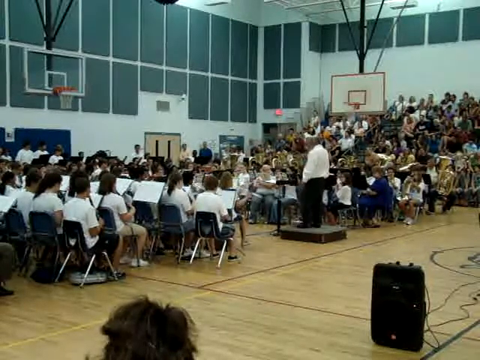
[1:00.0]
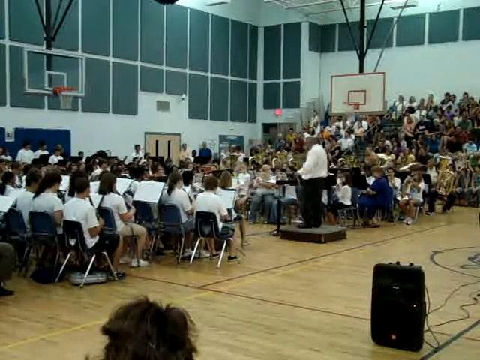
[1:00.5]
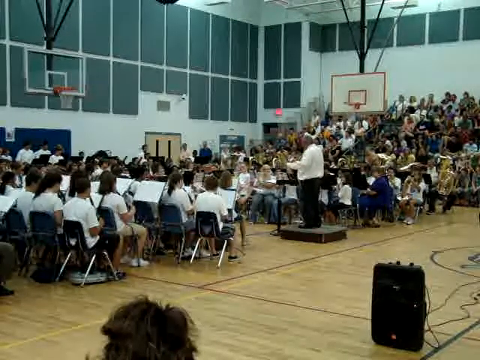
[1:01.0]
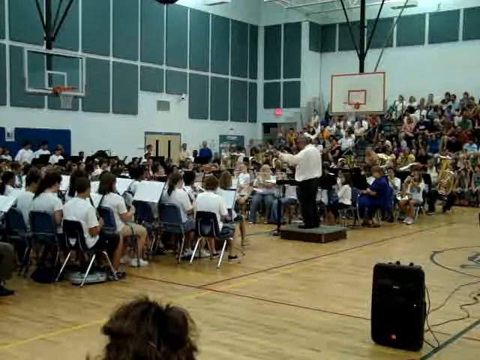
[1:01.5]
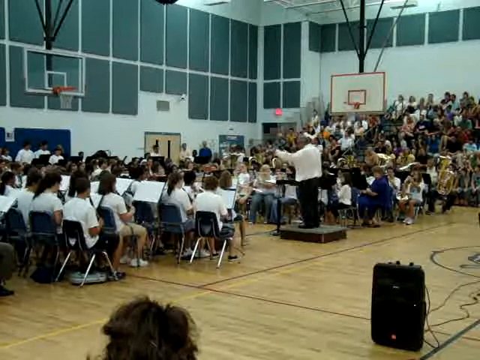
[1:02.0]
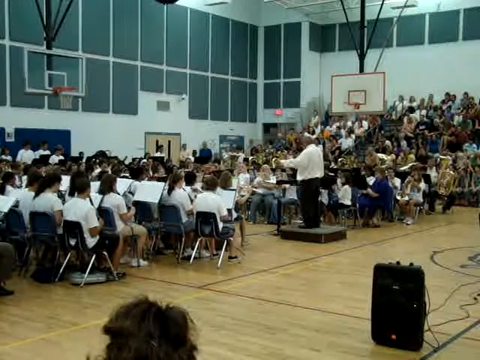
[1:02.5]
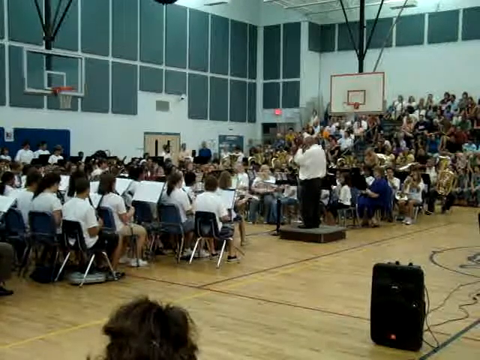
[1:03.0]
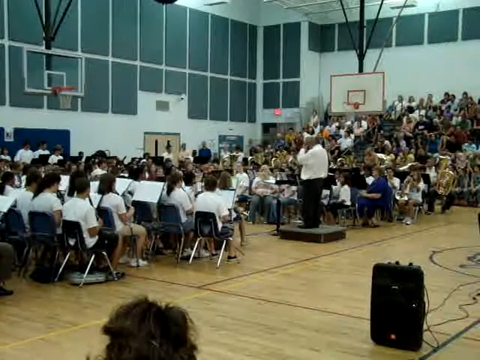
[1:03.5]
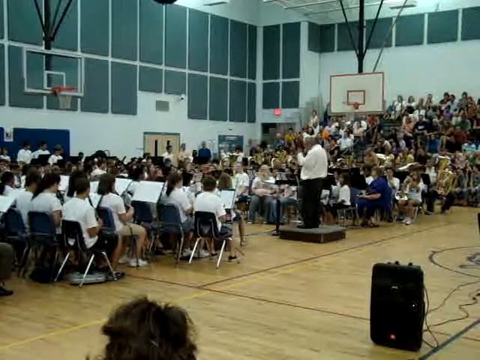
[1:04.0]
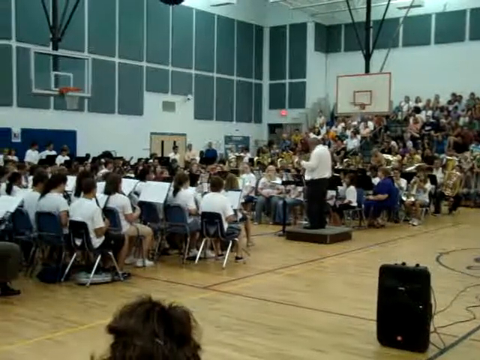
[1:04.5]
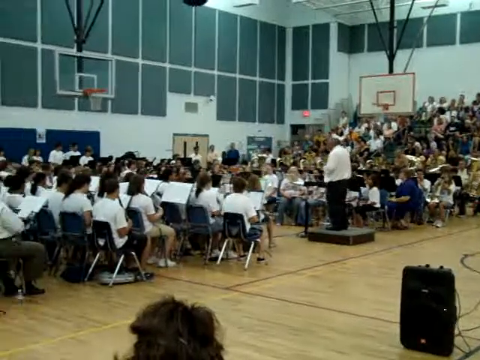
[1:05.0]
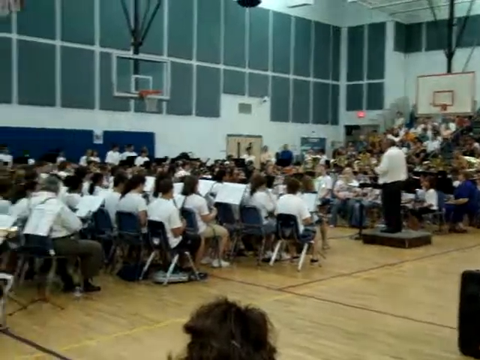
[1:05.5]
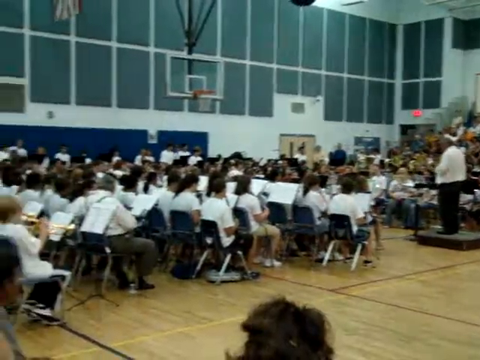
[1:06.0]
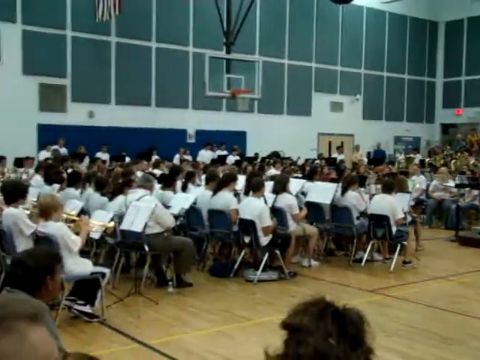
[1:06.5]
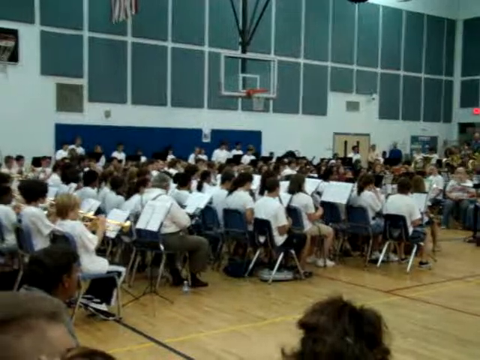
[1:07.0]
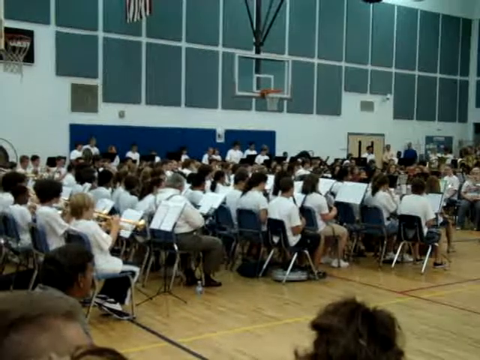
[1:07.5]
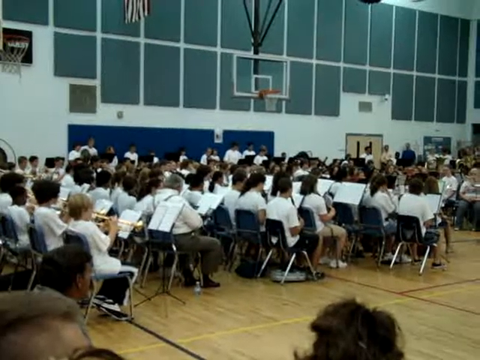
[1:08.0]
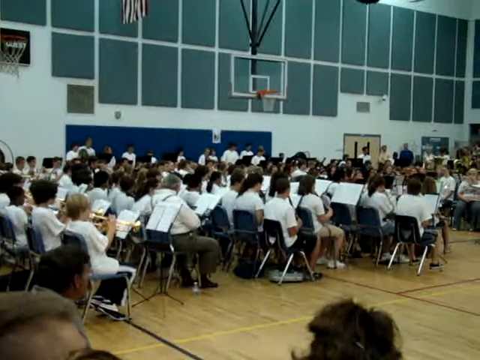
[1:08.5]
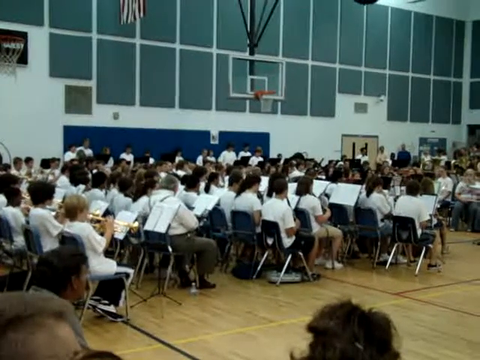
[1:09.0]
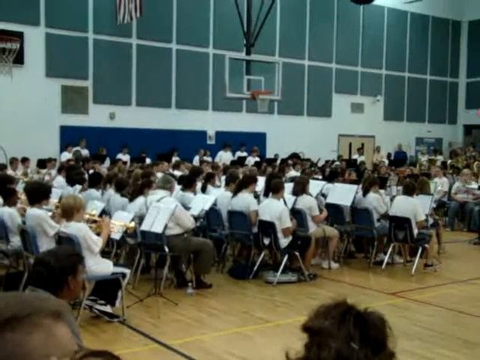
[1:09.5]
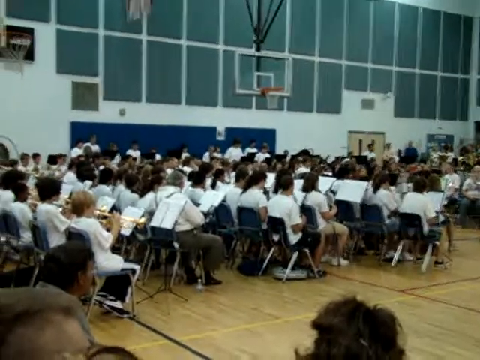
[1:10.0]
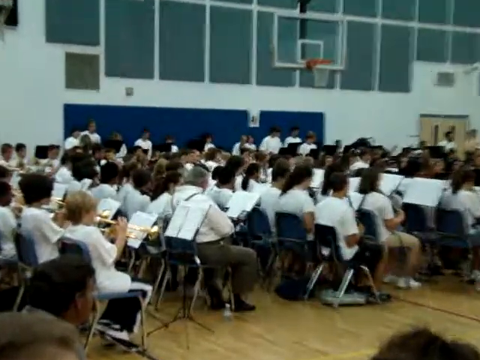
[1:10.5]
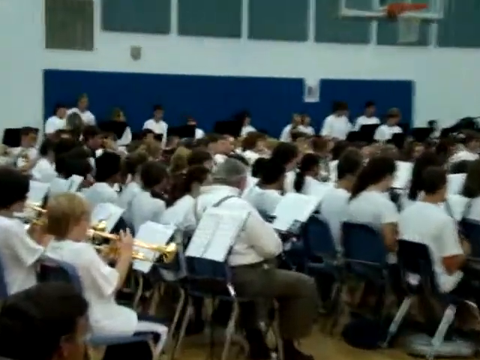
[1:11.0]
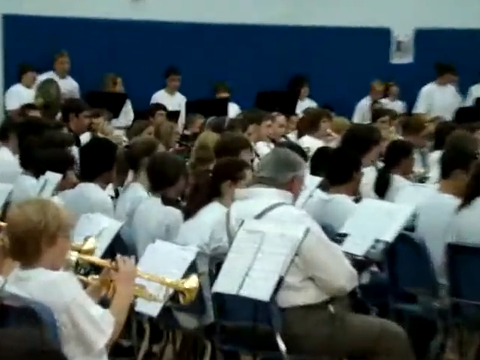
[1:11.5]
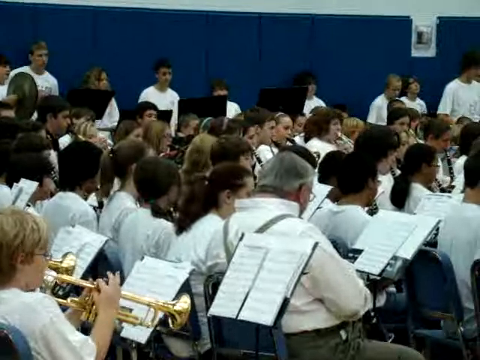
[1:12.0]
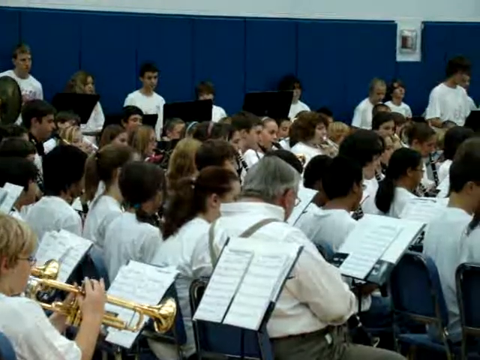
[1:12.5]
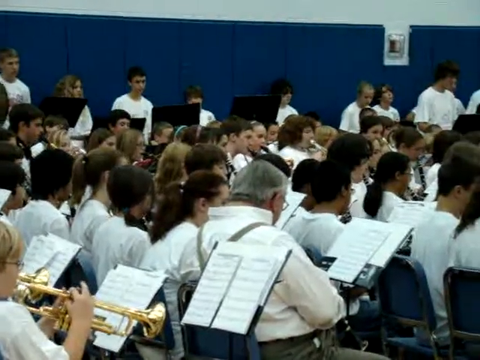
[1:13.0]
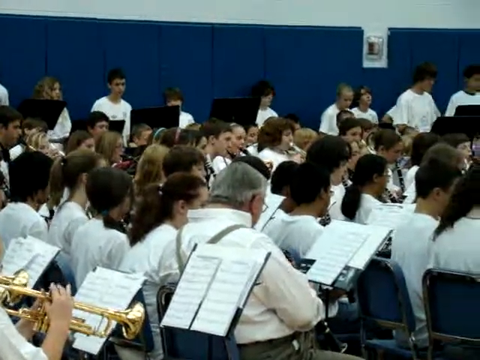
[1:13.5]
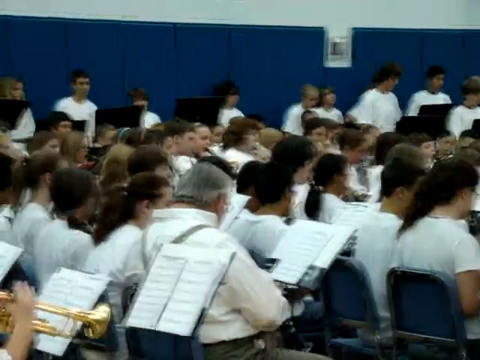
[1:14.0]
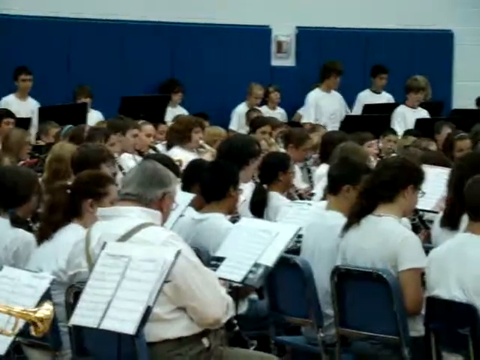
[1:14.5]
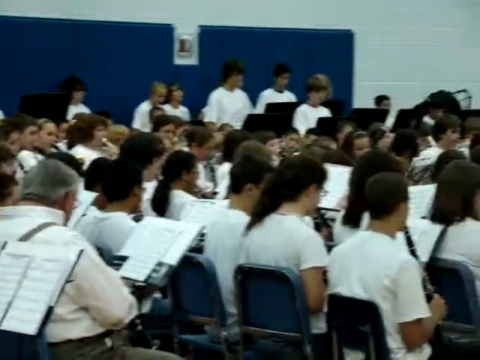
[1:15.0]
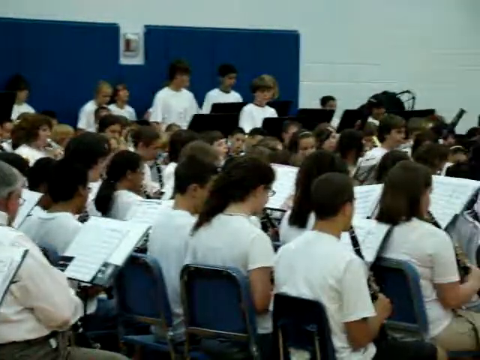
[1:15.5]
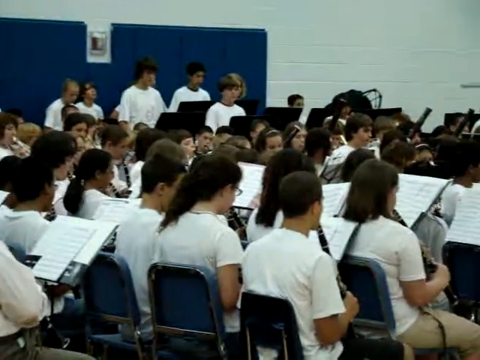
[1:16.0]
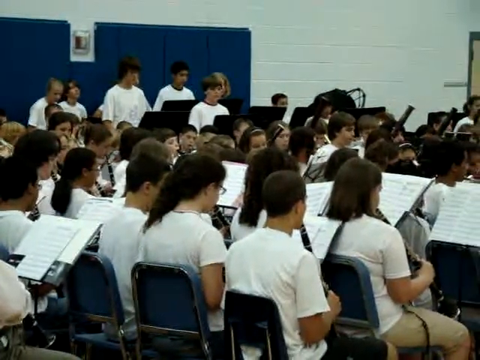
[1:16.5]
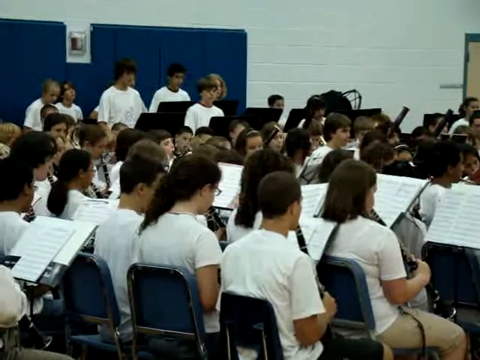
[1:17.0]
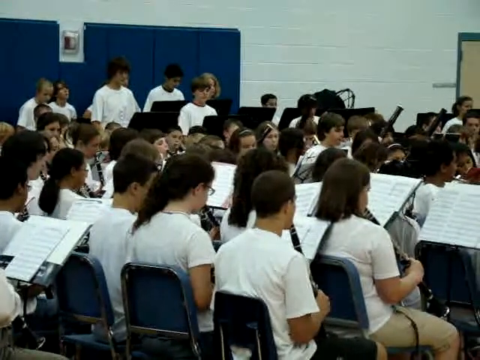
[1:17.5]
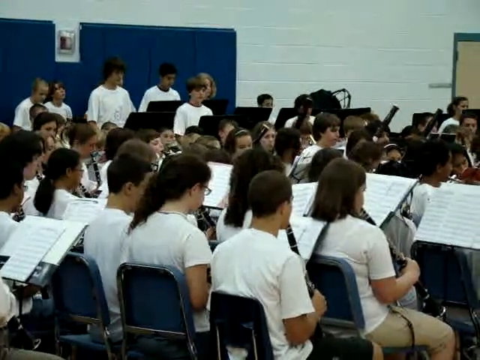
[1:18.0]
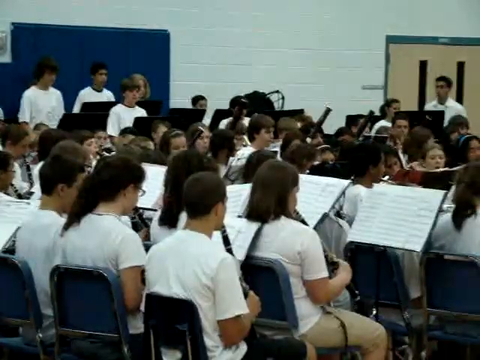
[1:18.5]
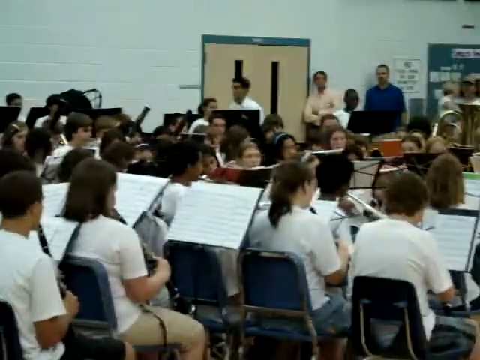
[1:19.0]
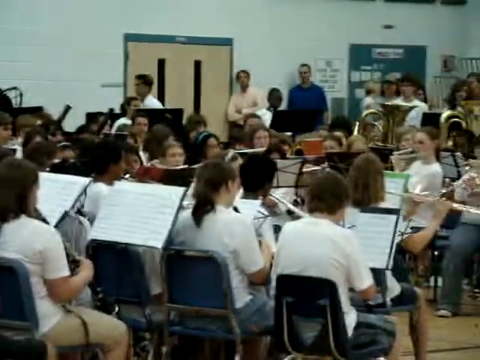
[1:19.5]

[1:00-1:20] A bunch of children sit in blue seats with a stand of sheet music in front of them. There is a white and red basketball hoop, as well as a clear and red basketball hoop on the left side. A bunch of green-blue tiles cover the wall. A door is in the background, along with an exit sign that is lit up. The composer moves his hands around, kind of guiding the children with their performances. The camera moves to the left to show other children seated playing their instruments, then zooms in to show some of the children closer as they perform. The camera then continues to move towards the right. There are a bunch of people in the bleachers, and a woman's head is kind of blocking some of the view at the bottom of the video. What looks to be a black speaker is sitting on the floor.